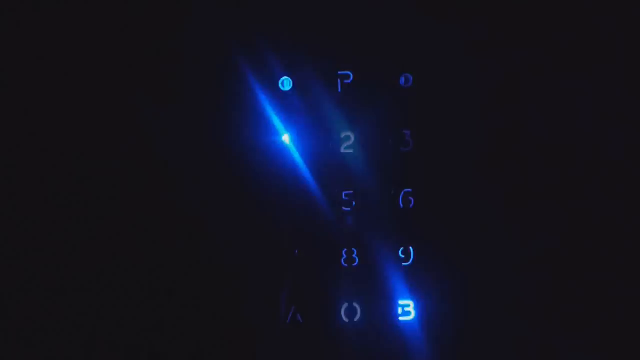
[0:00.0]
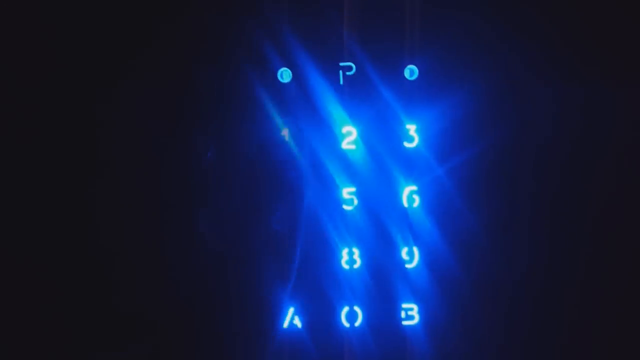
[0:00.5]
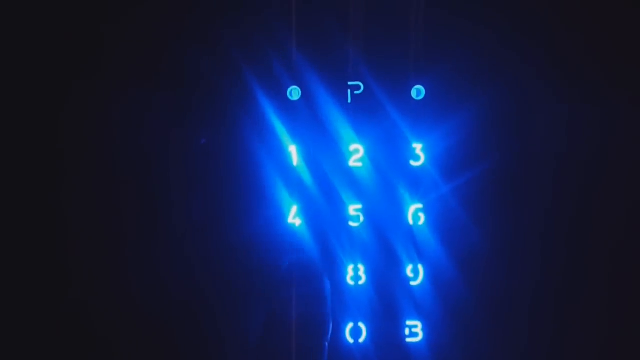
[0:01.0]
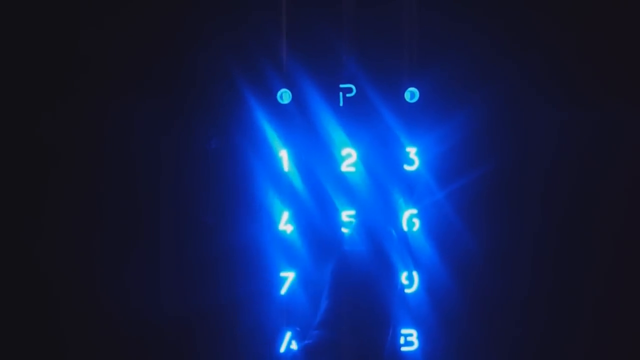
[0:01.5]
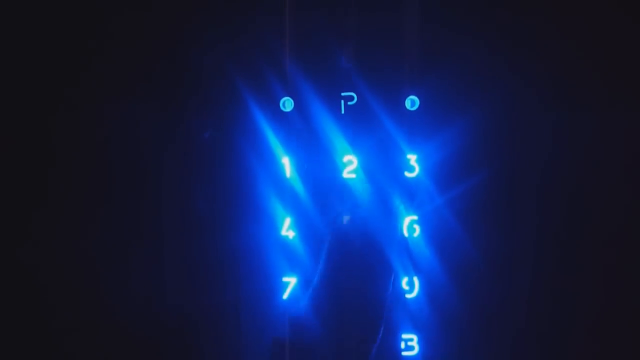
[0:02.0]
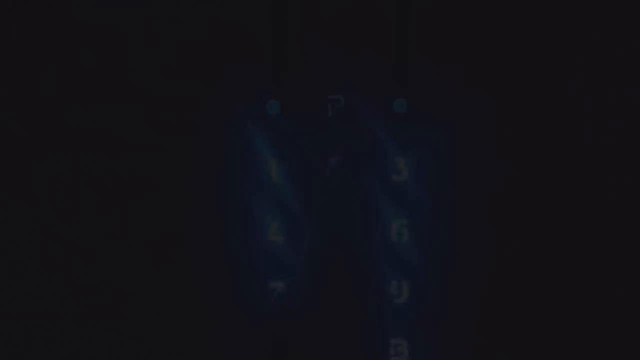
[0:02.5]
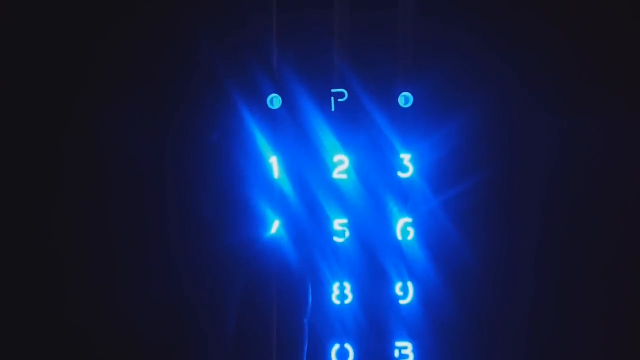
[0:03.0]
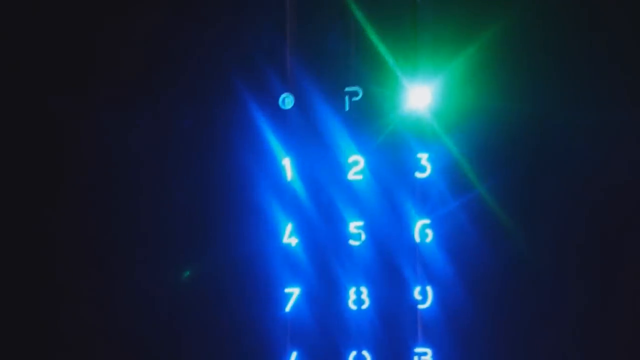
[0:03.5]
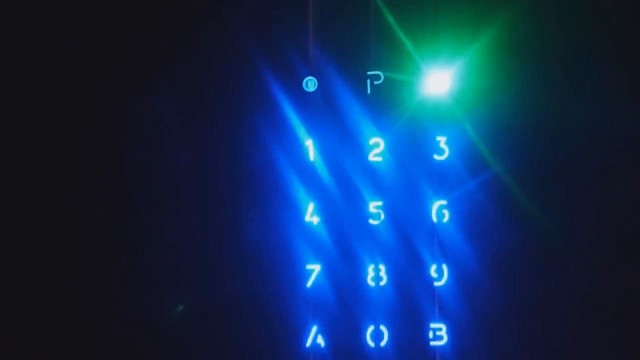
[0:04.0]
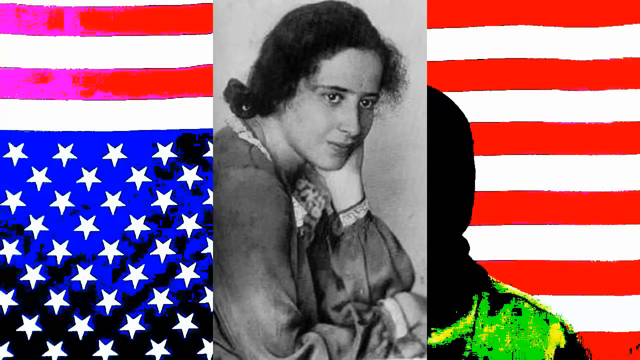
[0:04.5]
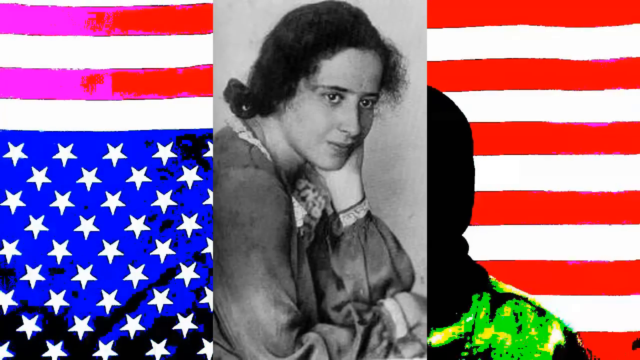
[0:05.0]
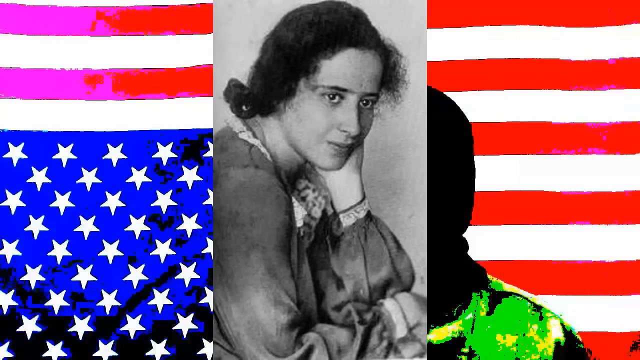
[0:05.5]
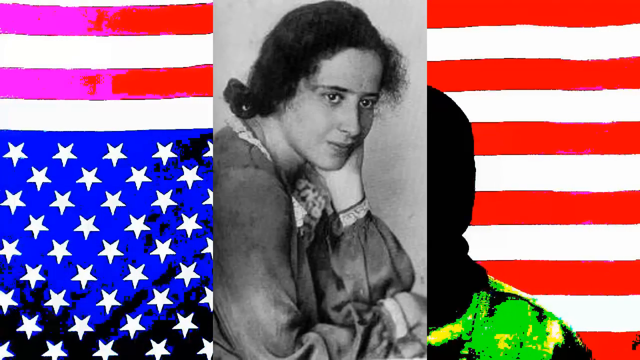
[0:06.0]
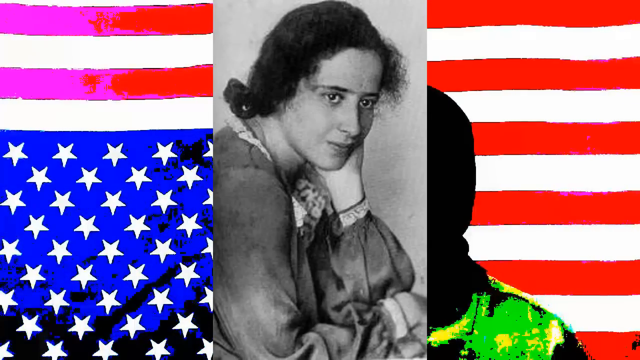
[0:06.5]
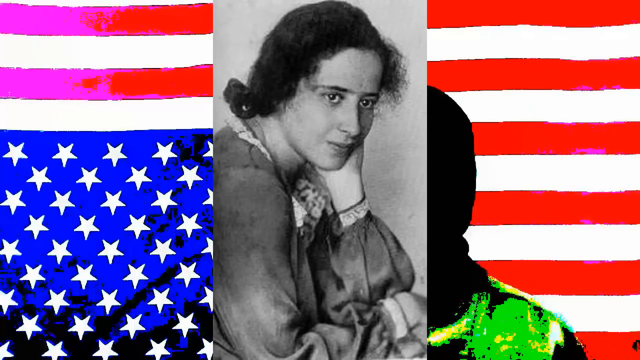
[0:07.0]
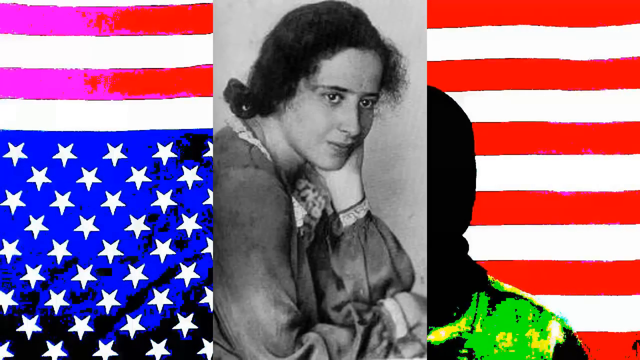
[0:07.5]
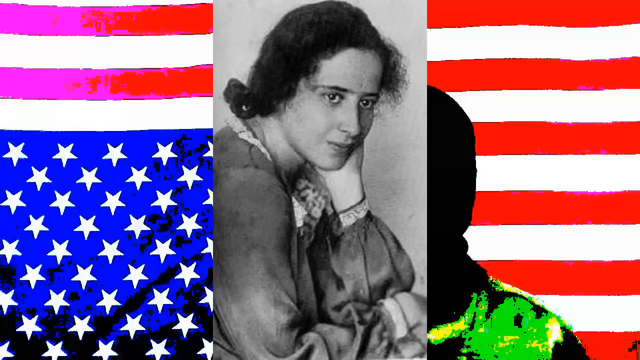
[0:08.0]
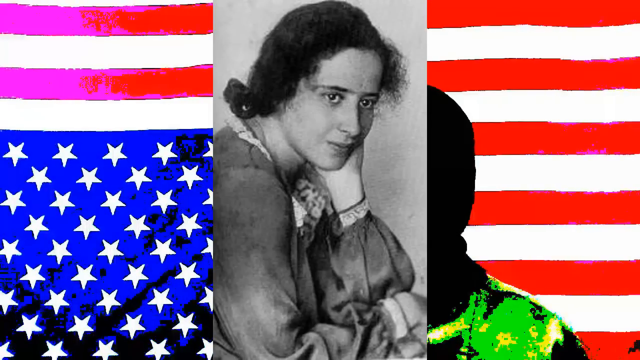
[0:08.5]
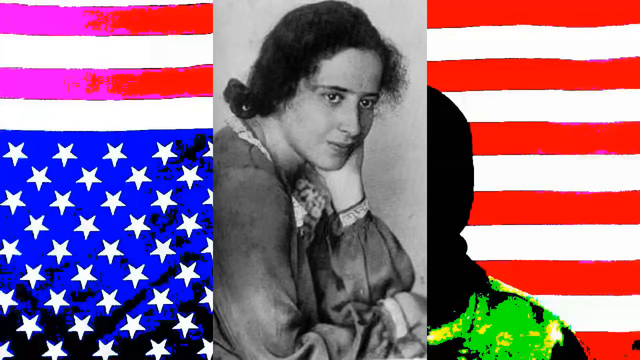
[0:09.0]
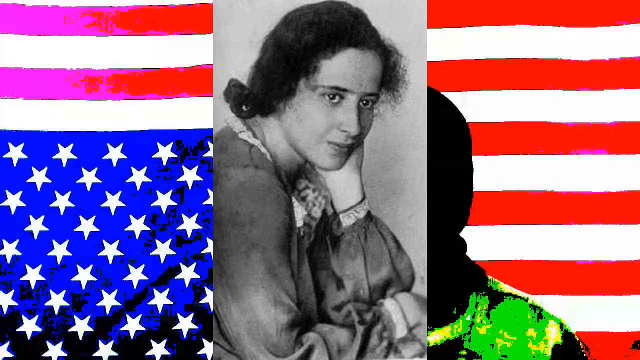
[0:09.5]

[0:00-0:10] A man types on a keypad backlit by a blue light; the code entered on the pin pad appears to be four seven five two four. A black-and-white photo of a posing woman then appears in the center of the screen. She has dark hair done up in a bun in the back. The photo is oriented vertically, and in the background behind it is an upside-down American flag. On the right side of the photo is the figure of someone whose face is obscured.